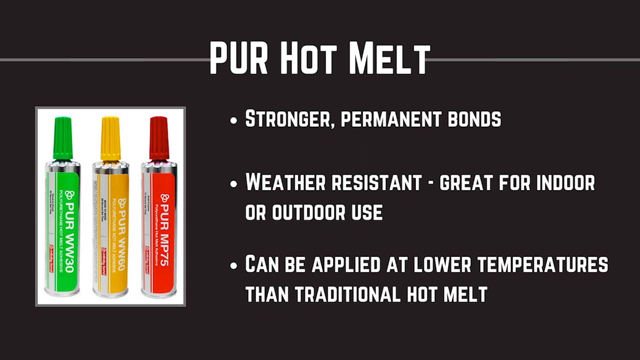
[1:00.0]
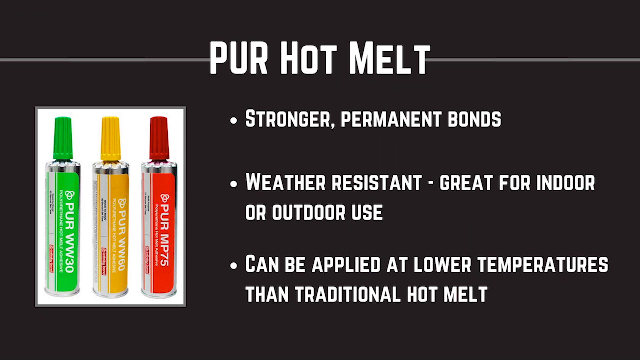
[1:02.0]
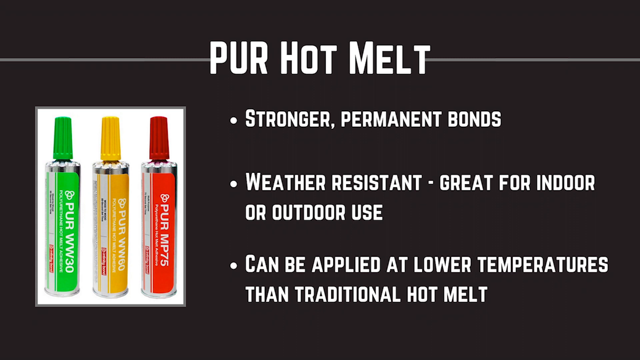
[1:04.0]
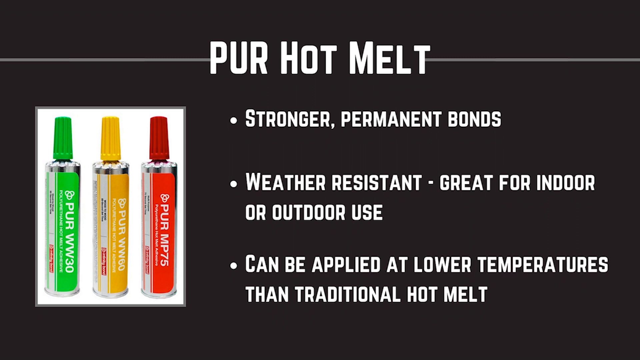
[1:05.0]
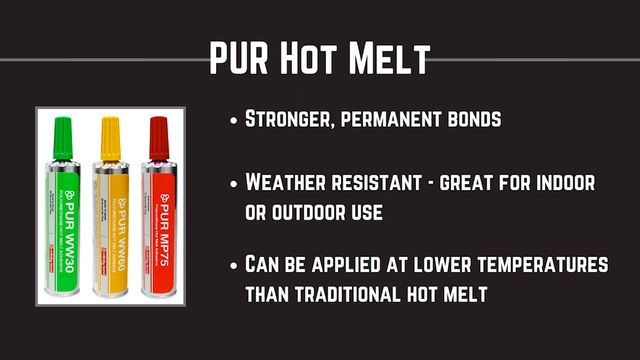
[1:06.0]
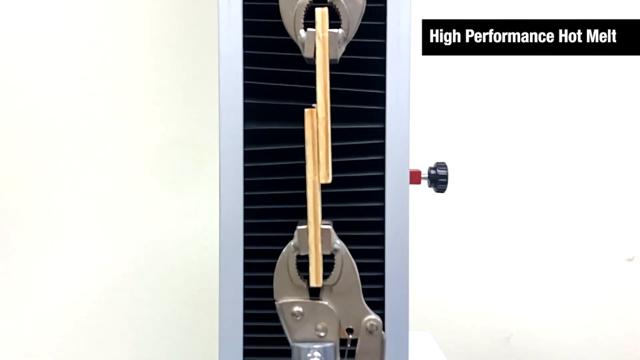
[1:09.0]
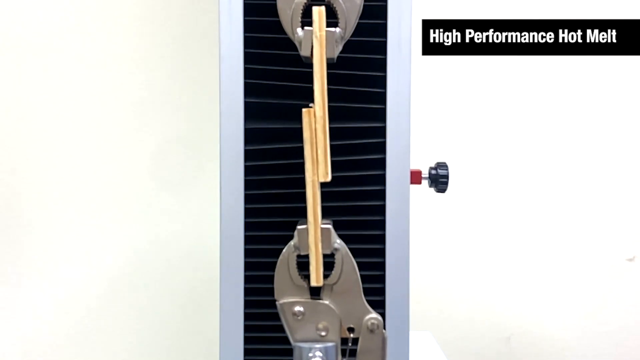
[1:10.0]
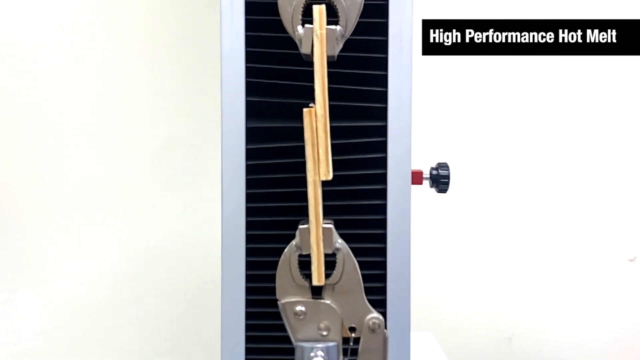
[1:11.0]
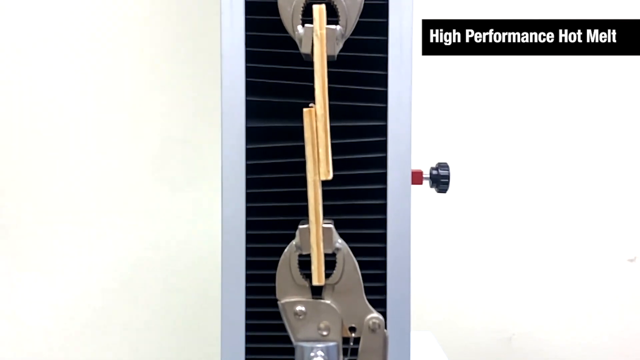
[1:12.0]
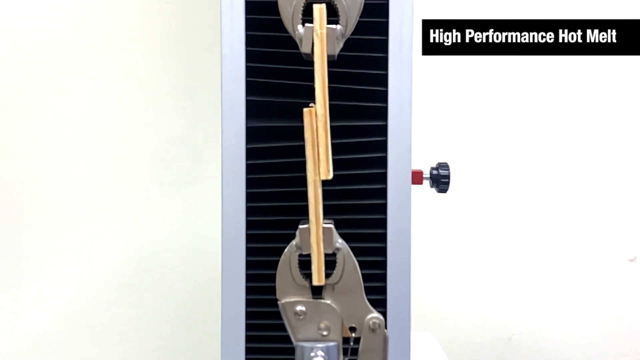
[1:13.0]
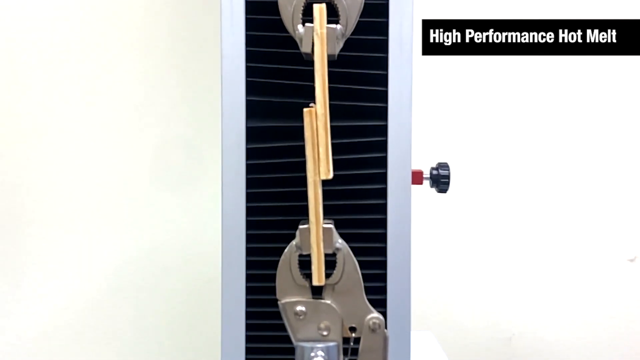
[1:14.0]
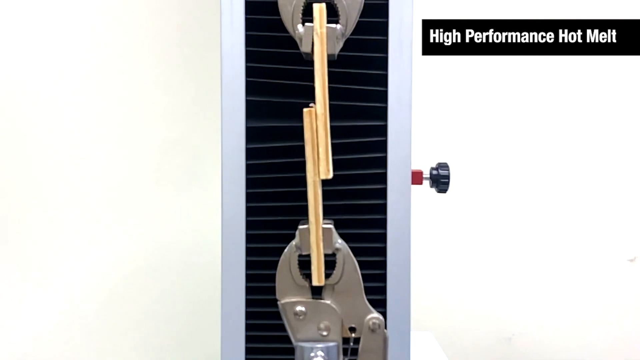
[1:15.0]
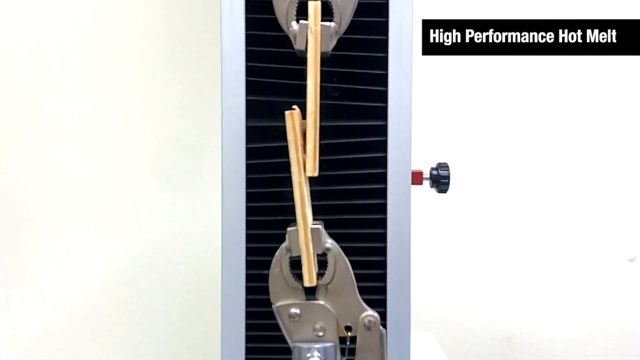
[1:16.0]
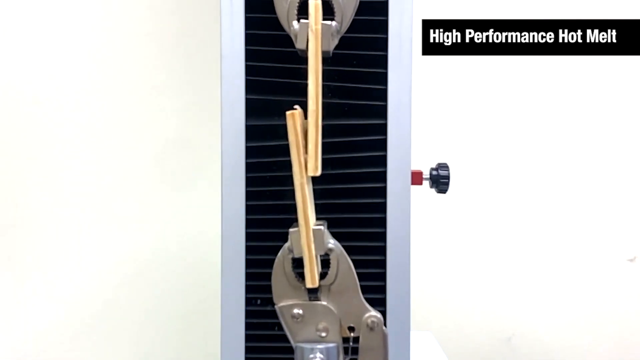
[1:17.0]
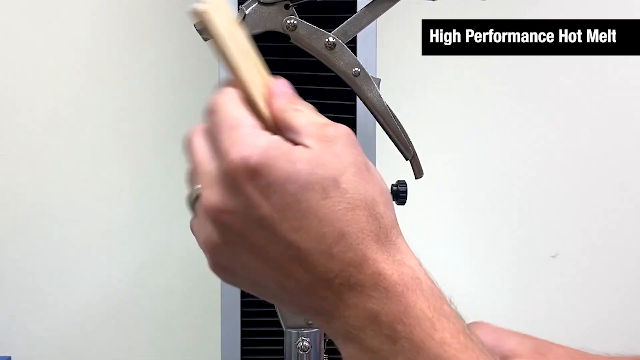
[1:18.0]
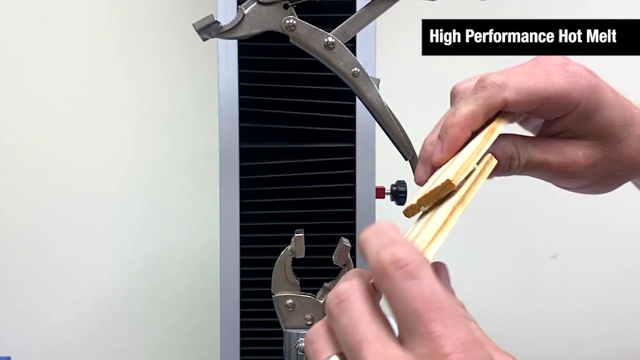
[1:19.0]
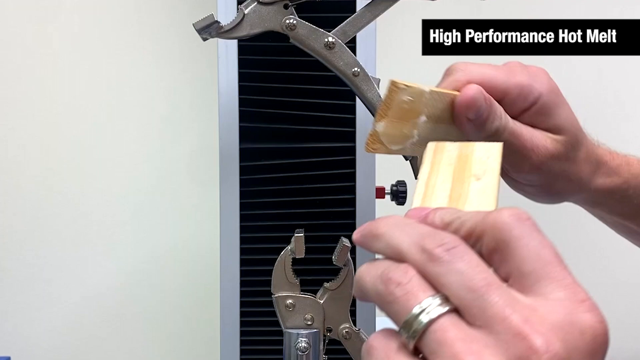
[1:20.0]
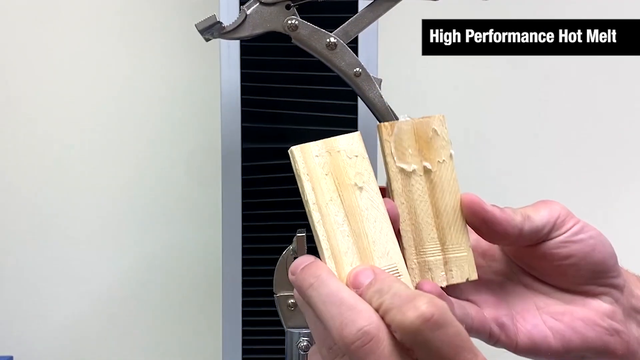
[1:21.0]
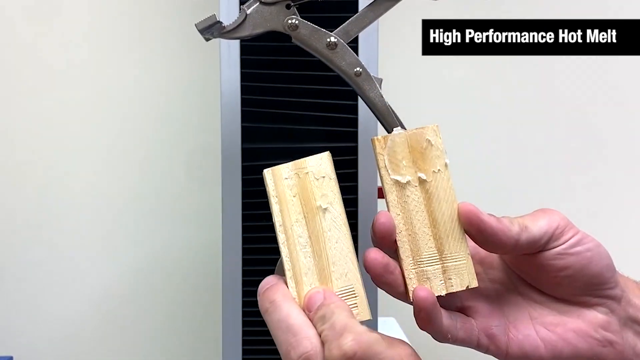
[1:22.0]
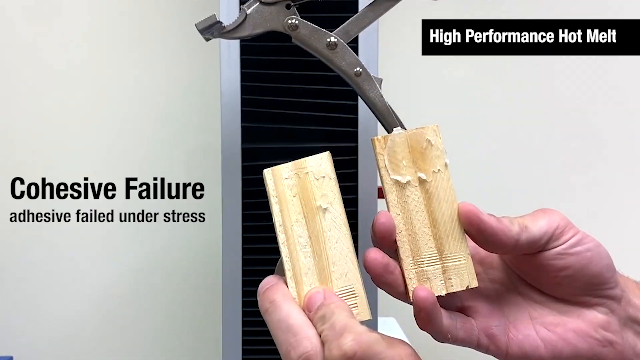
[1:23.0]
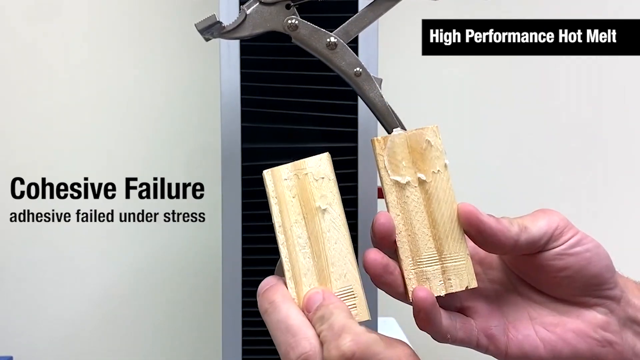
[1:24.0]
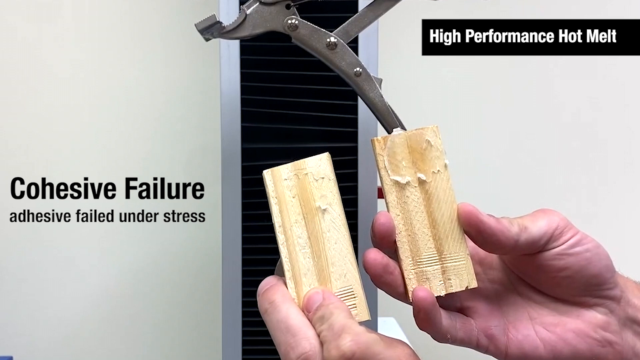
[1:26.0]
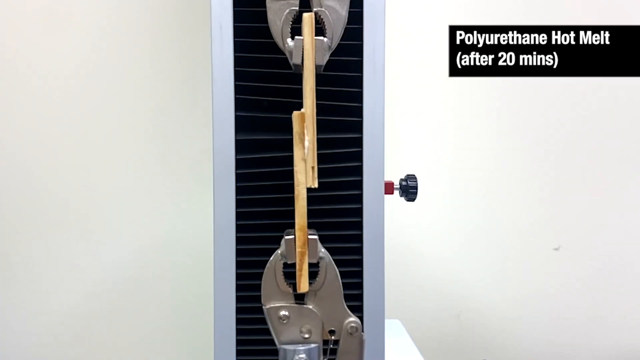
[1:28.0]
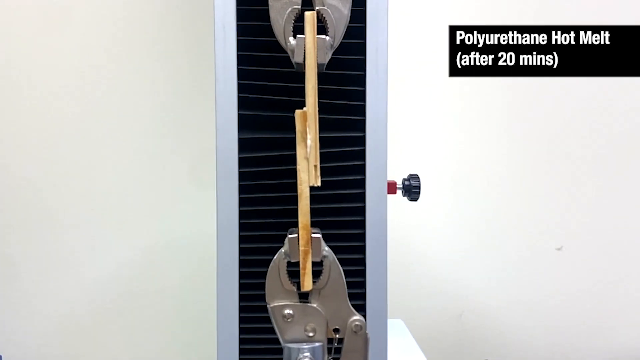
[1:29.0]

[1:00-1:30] A static slide with a black background shows a photograph of the PUR product in three tubes. Each tube is silver with a nozzle, and the label matches the nozzle cap. The tube on the far left is green, PURWW30; the one in the middle is yellow, PURWW00; and the tube on the far right is red, PURMP75. To the right are three bullet points stating their advantages over traditional glue gun adhesives. Footage then shows two metal clamps holding the two glued pieces of wood and trying to pull them apart, apparently some sort of machine that exerts a pulling force, with the caption "high performance hot melt". The wooden pieces start coming apart, and a pair of hands enters the frame and pulls them apart completely.